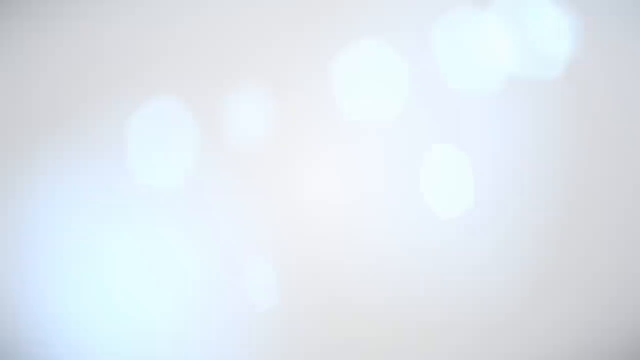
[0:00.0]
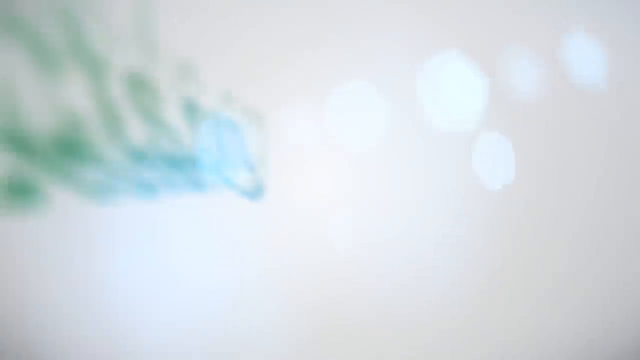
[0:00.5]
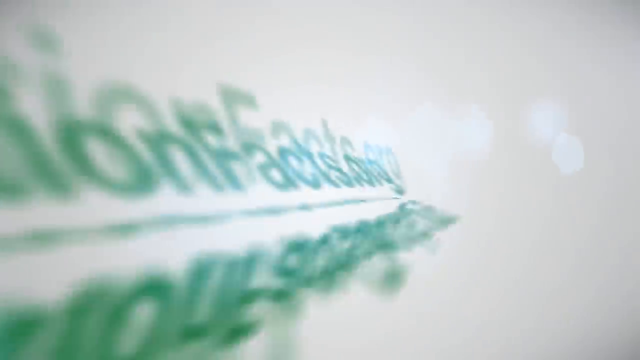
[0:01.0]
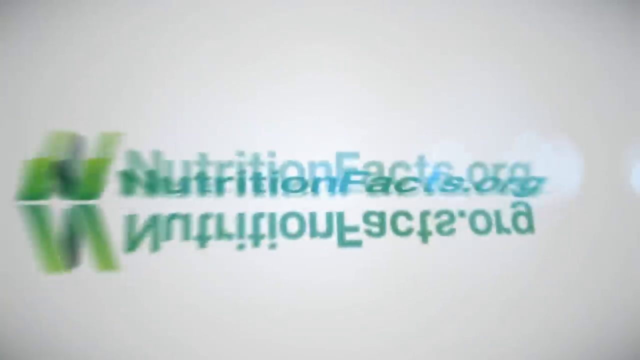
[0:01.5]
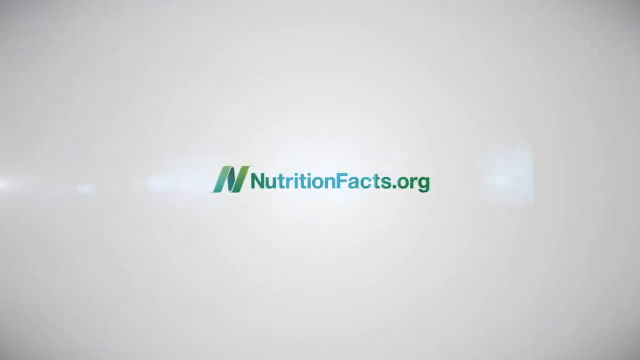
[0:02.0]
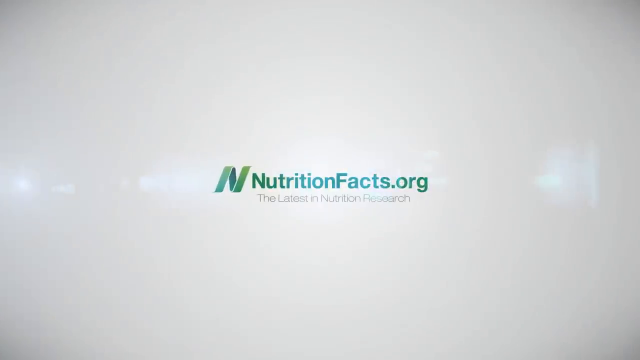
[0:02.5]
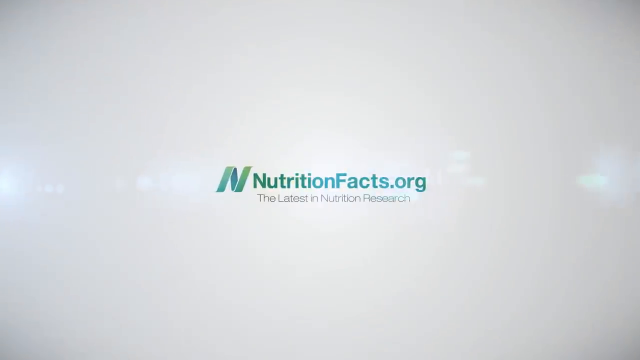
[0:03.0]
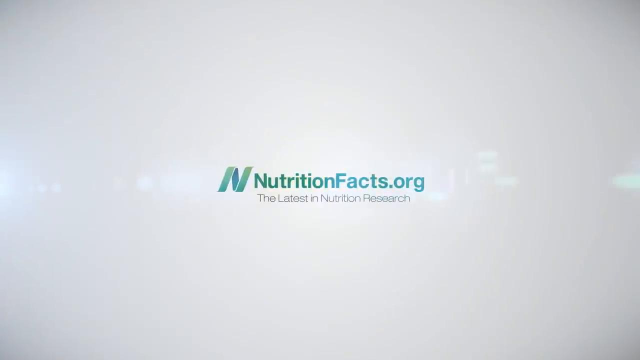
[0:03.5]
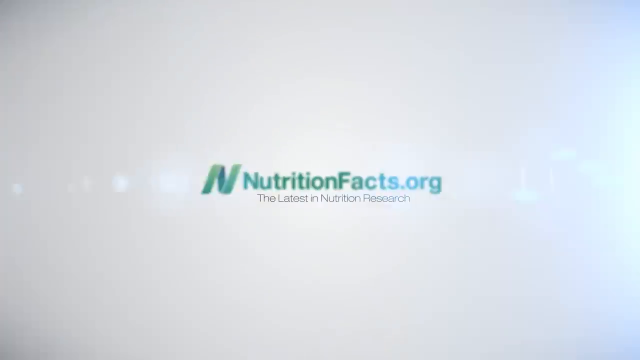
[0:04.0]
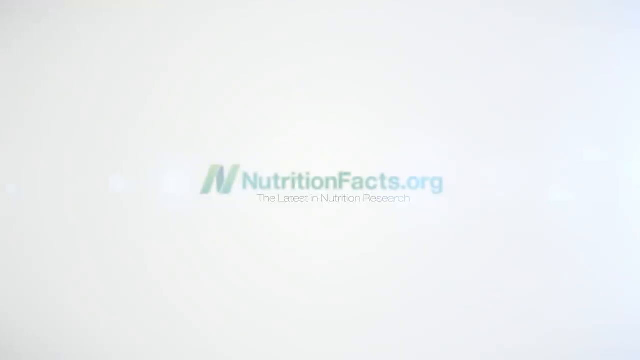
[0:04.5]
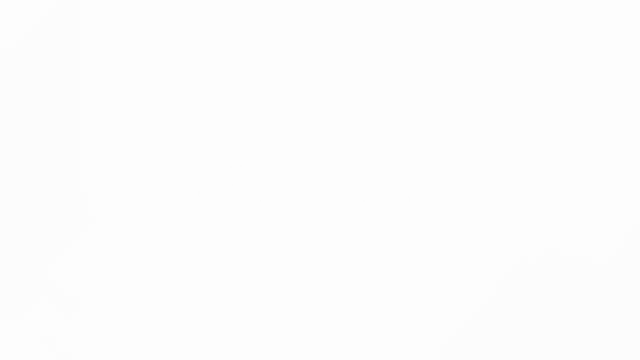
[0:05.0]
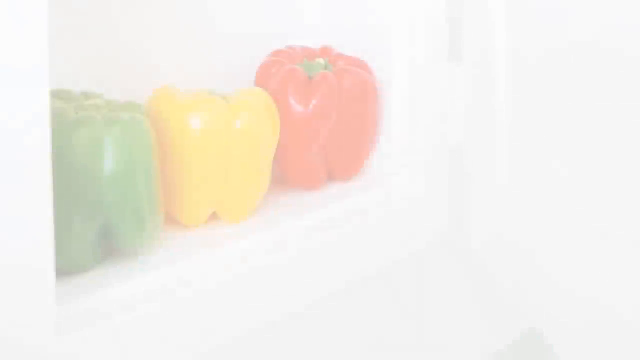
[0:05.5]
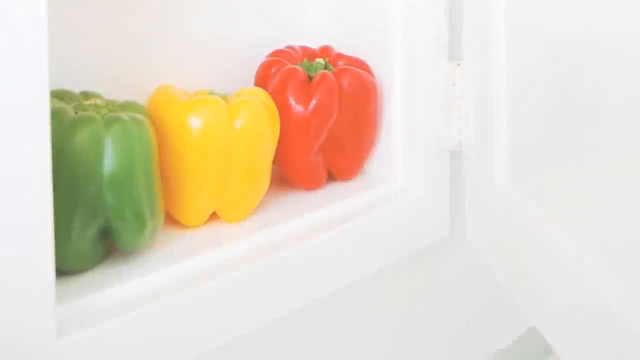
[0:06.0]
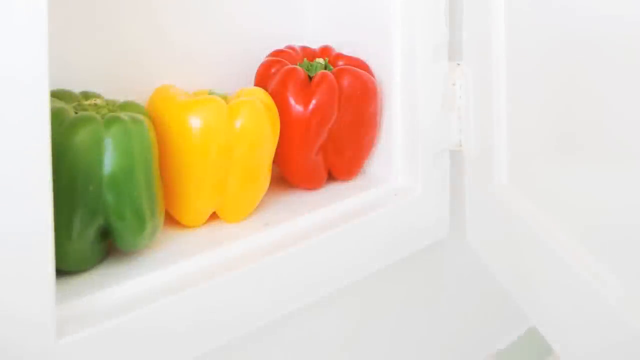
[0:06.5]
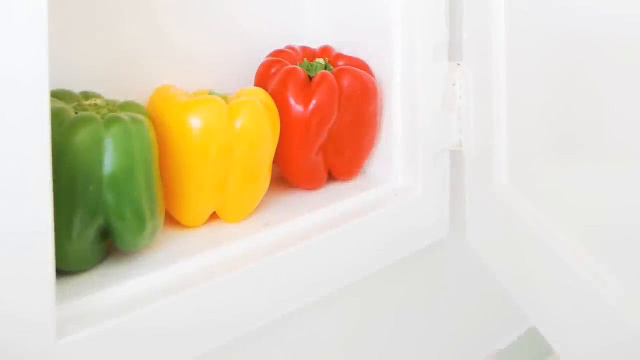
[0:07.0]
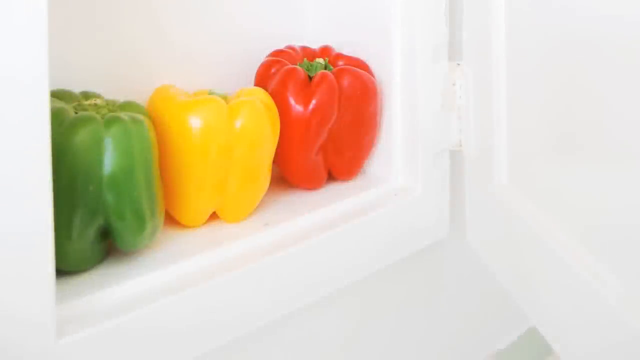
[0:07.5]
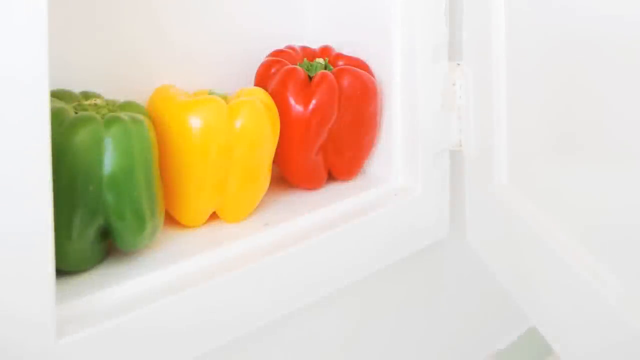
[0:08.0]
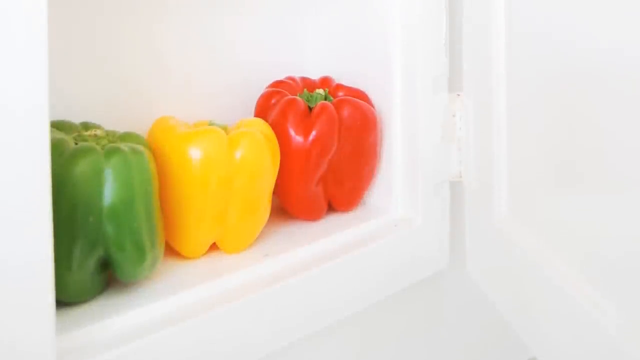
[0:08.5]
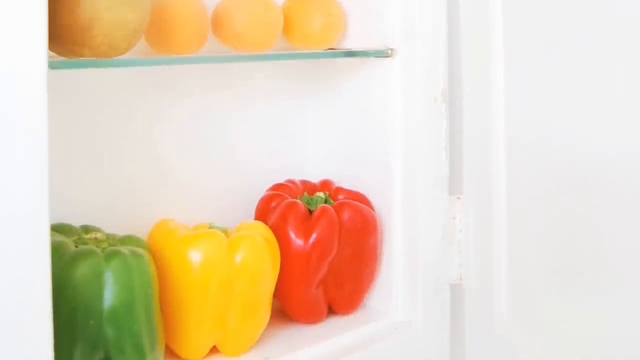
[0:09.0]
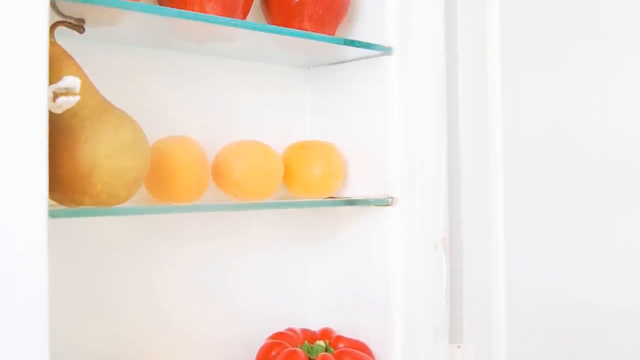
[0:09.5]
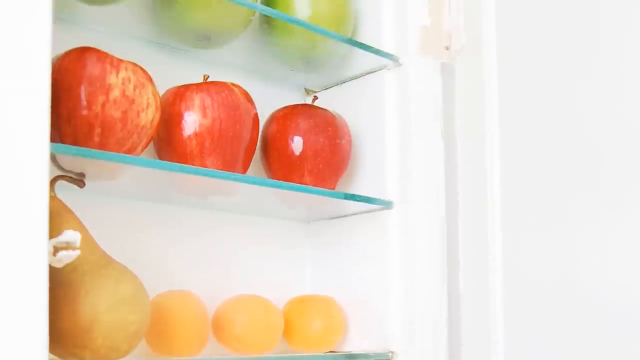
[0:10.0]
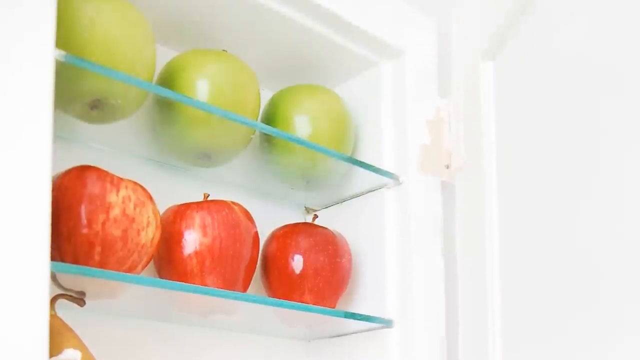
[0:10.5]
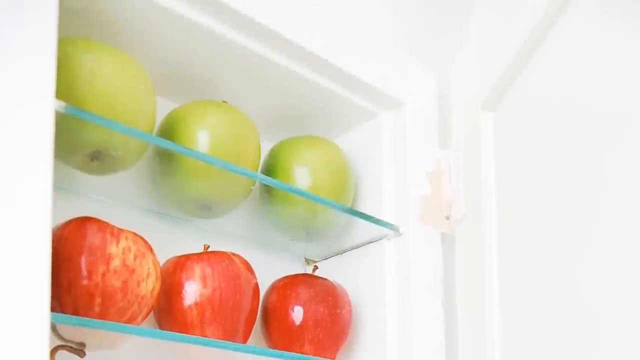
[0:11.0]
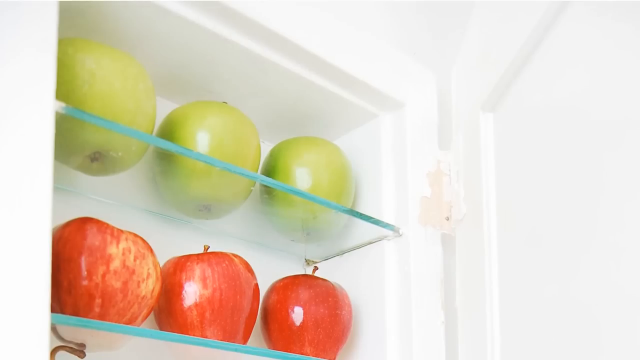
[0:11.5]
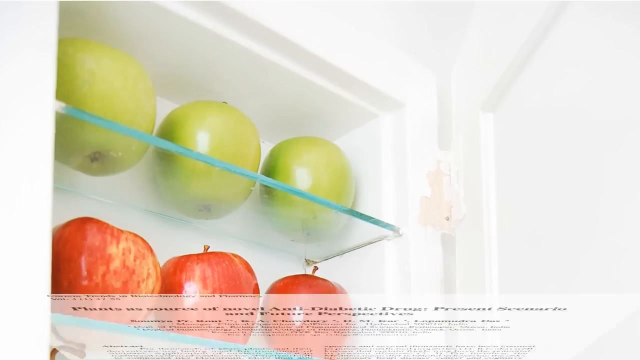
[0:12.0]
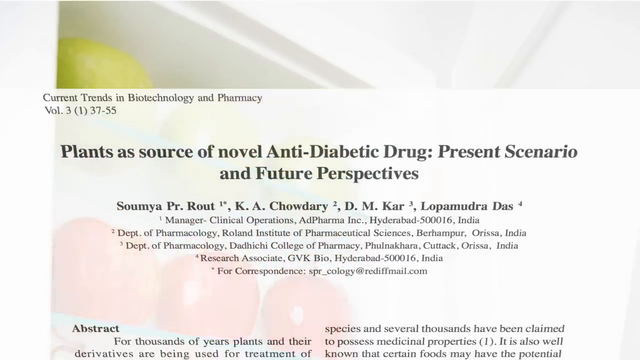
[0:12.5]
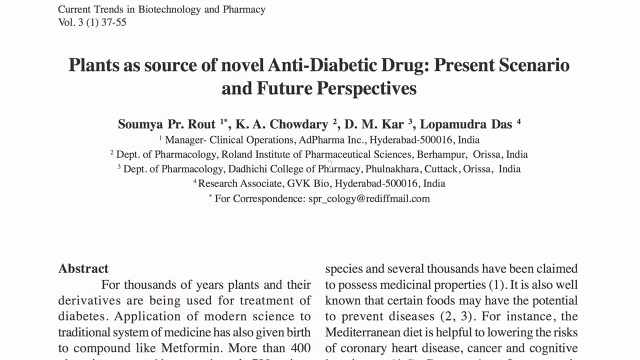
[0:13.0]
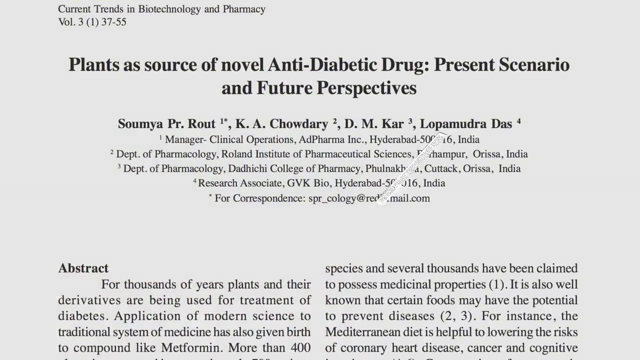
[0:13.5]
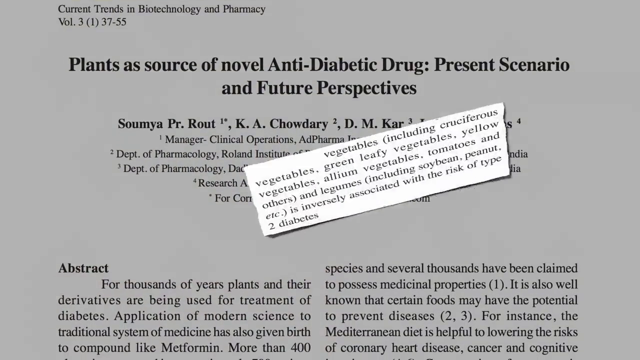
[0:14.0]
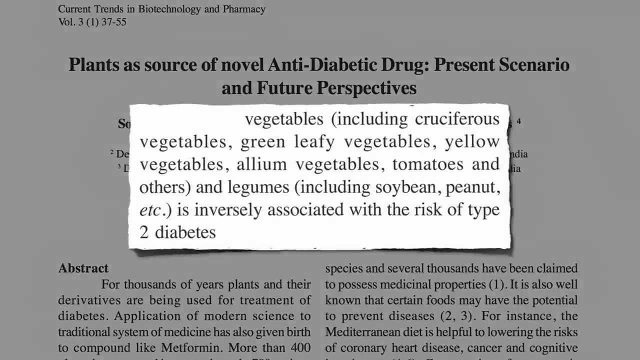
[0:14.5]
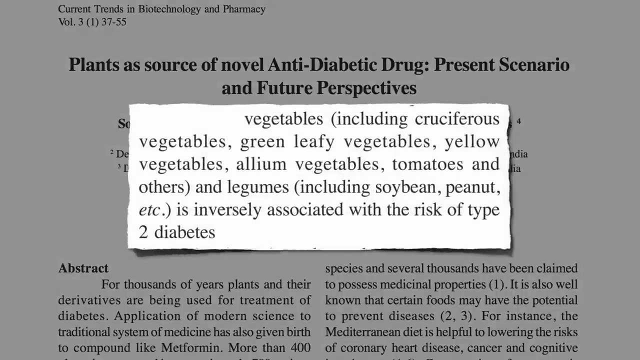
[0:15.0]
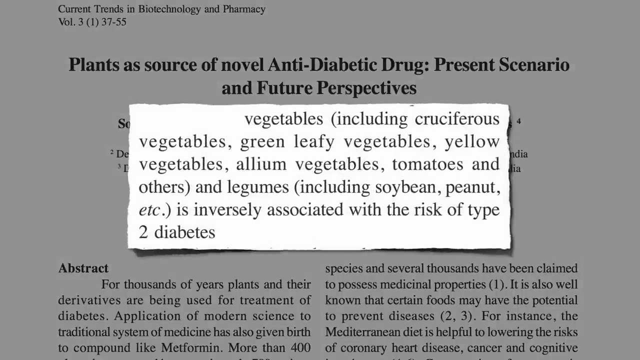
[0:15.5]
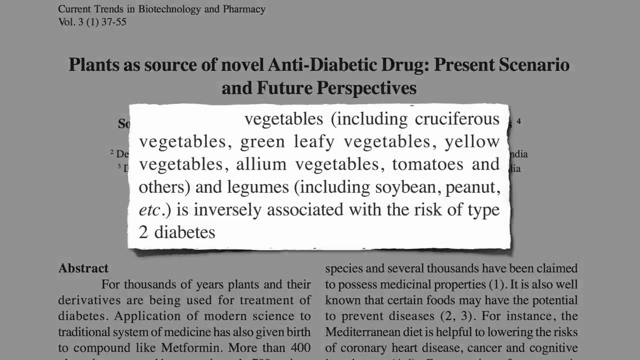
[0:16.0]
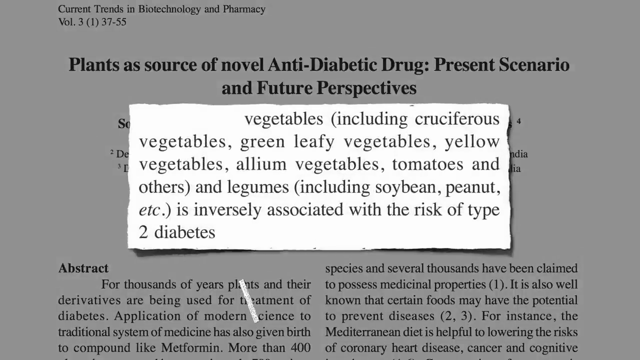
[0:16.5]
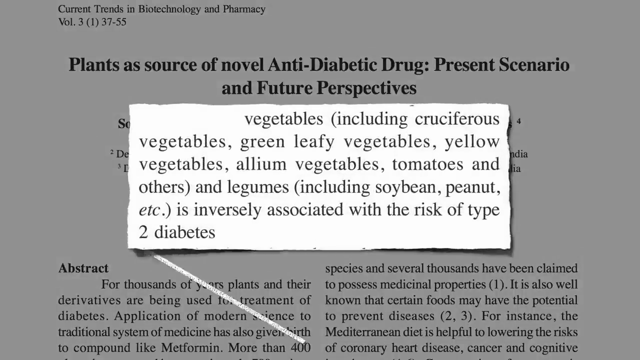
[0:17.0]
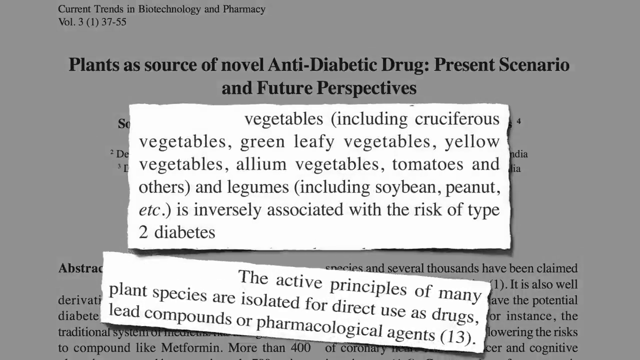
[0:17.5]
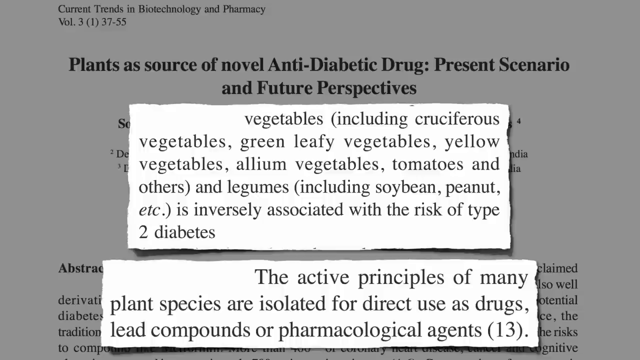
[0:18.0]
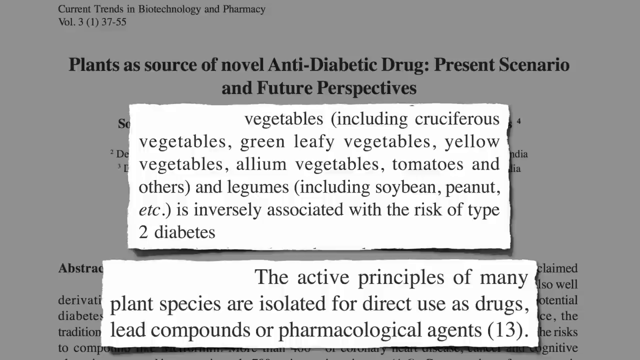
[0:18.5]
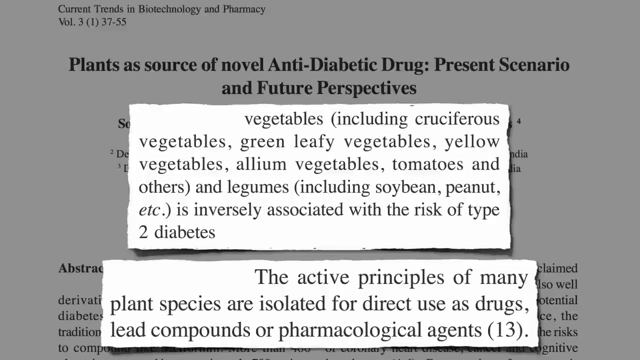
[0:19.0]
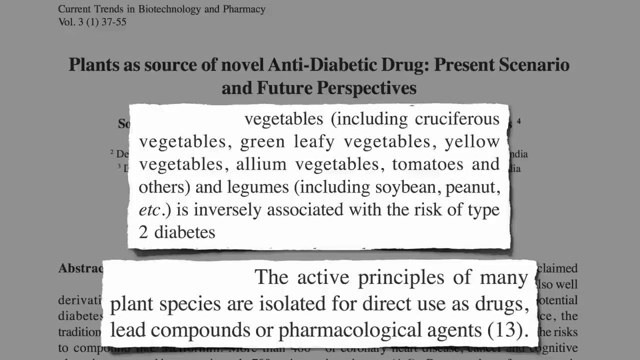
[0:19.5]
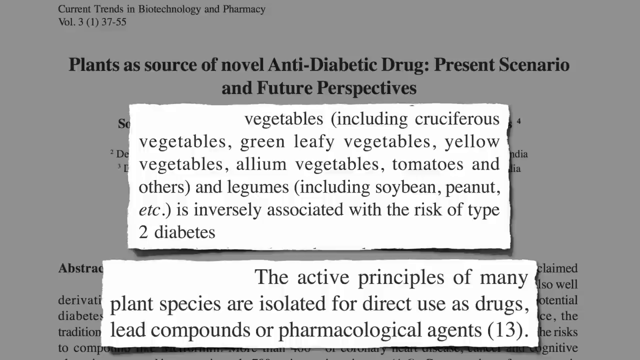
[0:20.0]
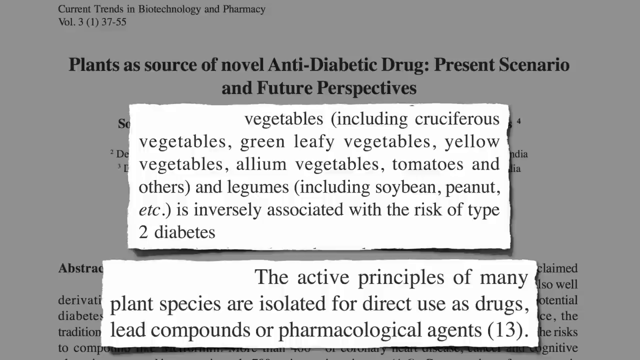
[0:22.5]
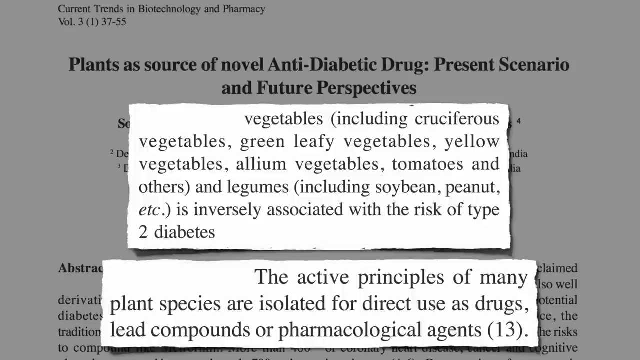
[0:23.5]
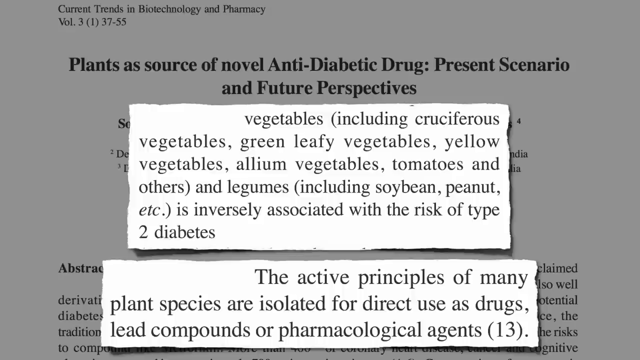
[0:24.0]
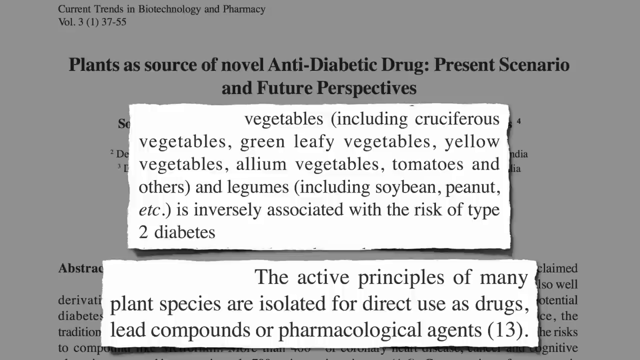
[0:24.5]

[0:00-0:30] A white background quickly gives way to a small ray of light, and a word sort of spins into view. The name of an organization, "nutritionfacts.org", appears on screen. Its logo seems to be a capital N that looks like a ribbon, in shades of green. Below "nutritionfacts.org" it says "the latest in nutrition research". The shot cuts to a green pepper with a yellow pepper to its right and a red pepper to the right of the yellow one. They look like they are in a white cupboard, or possibly in a fridge. The view scans upwards, showing what looks like a little shelf, maybe in a tiny refrigerator. On the second glass shelf there is a yellowish-brown pear on the left side and three yellow fruits that might be plums; on the shelf above are three red apples, and above that three green apples. An article then pops up on screen. At the very top, in small Times New Roman print, it reads "current trends in biotechnology and pharmacy volume three", and after a space the heading reads "plants as source of novel anti-diabetic drug present scenario and future perspectives".